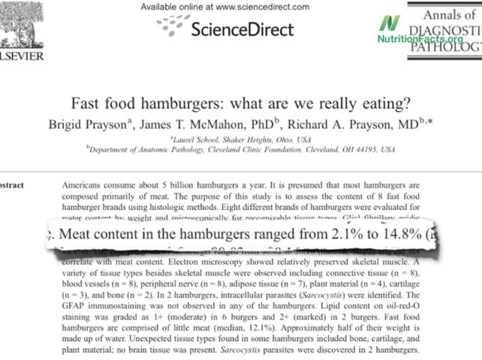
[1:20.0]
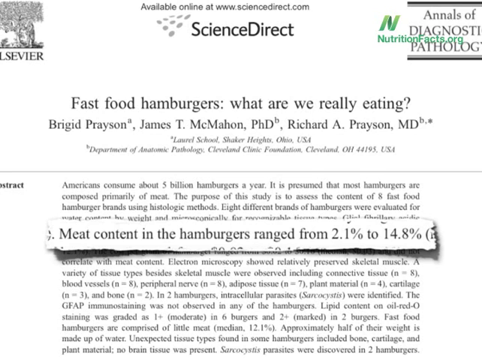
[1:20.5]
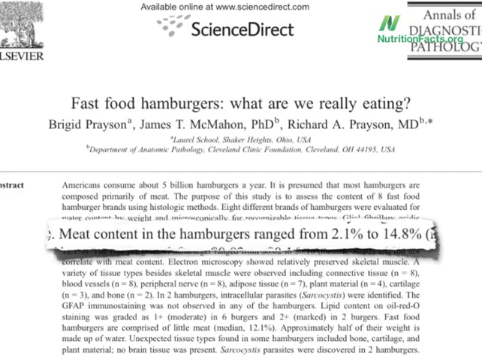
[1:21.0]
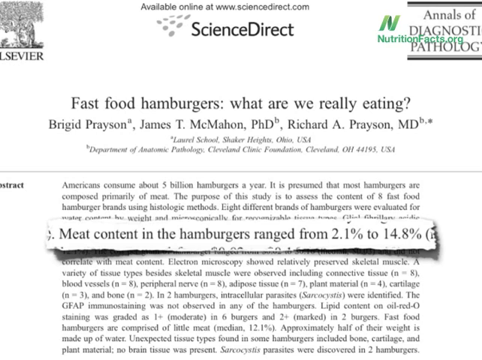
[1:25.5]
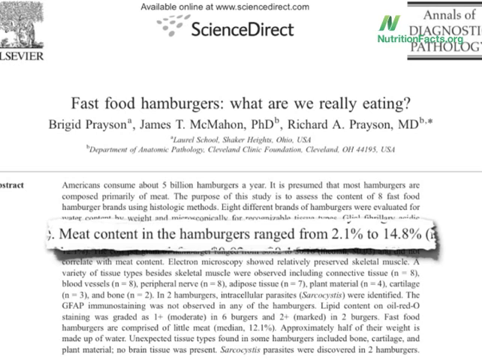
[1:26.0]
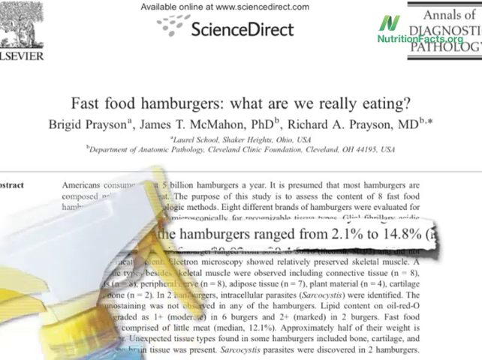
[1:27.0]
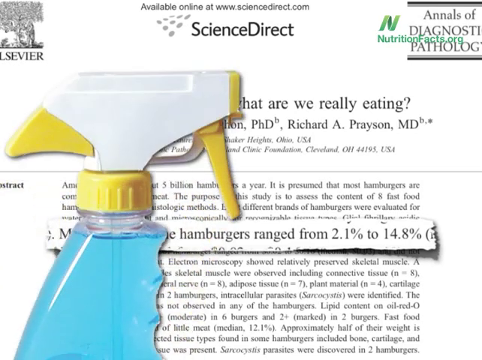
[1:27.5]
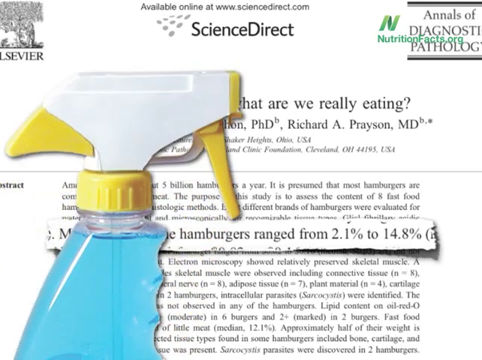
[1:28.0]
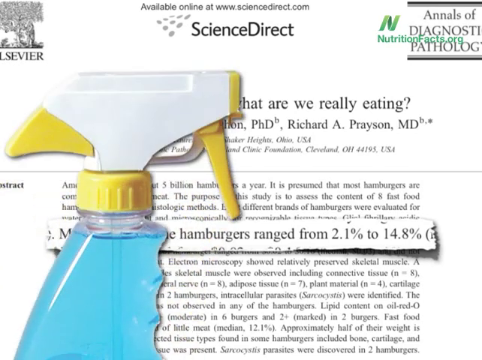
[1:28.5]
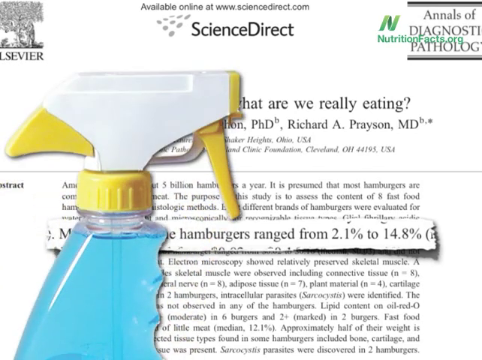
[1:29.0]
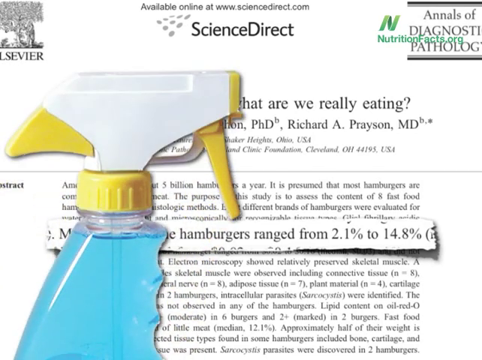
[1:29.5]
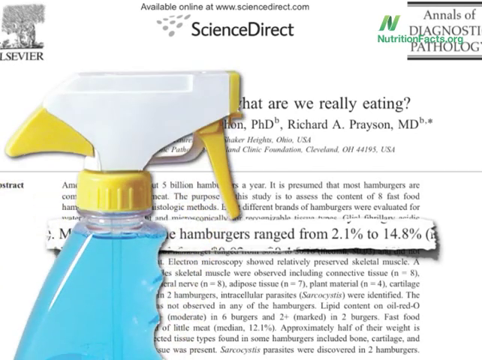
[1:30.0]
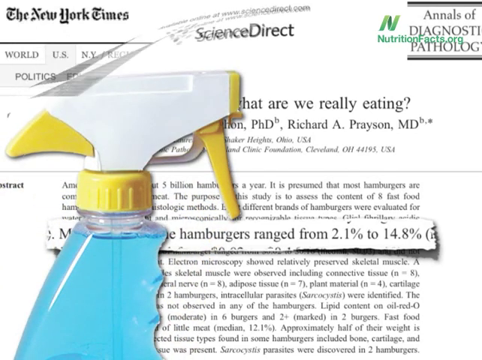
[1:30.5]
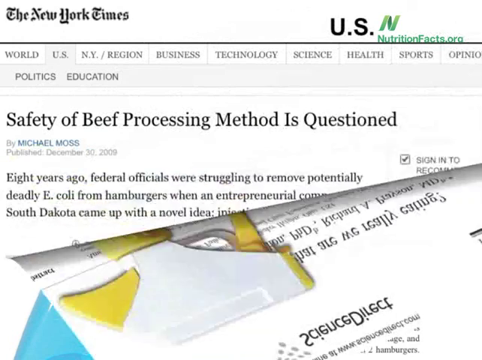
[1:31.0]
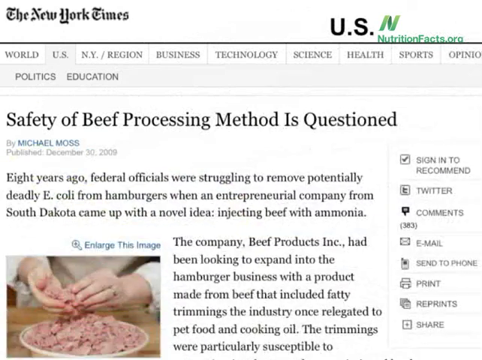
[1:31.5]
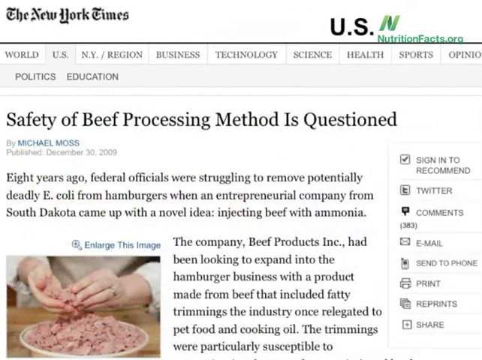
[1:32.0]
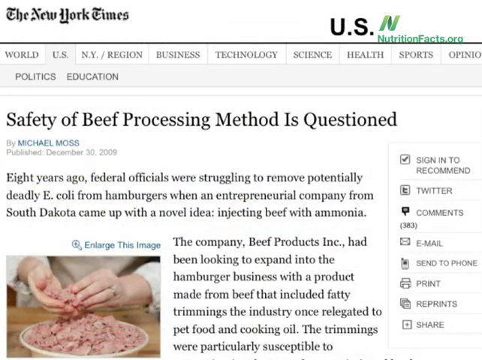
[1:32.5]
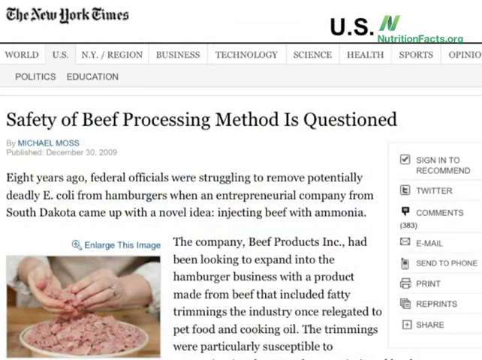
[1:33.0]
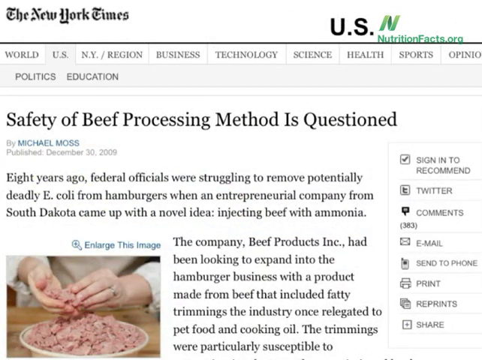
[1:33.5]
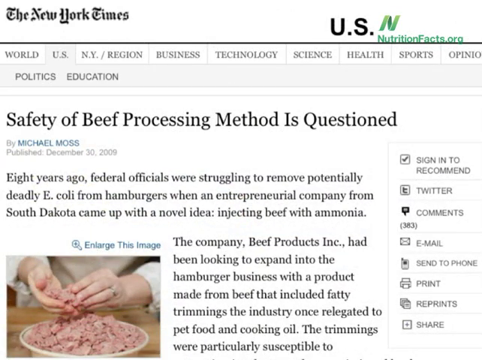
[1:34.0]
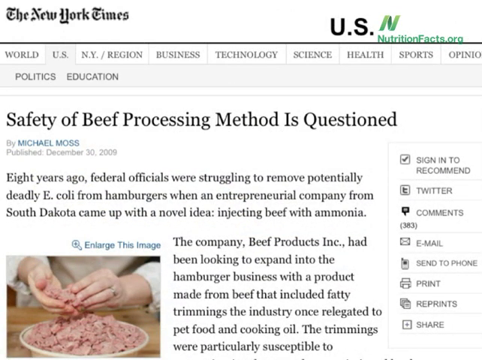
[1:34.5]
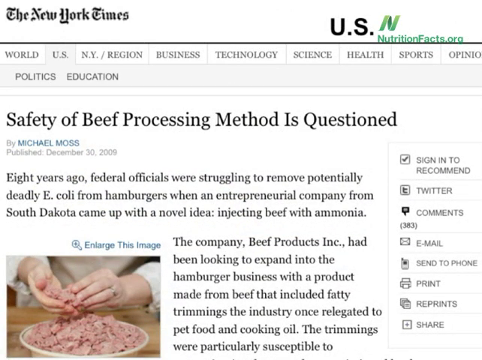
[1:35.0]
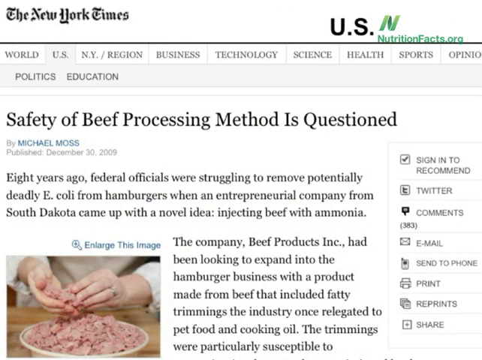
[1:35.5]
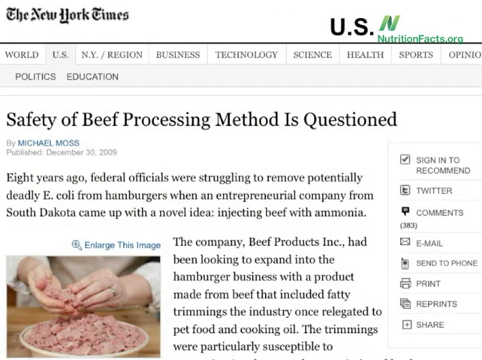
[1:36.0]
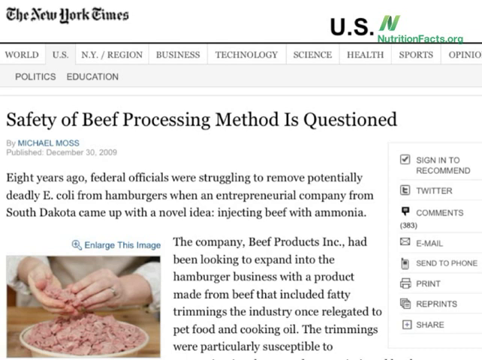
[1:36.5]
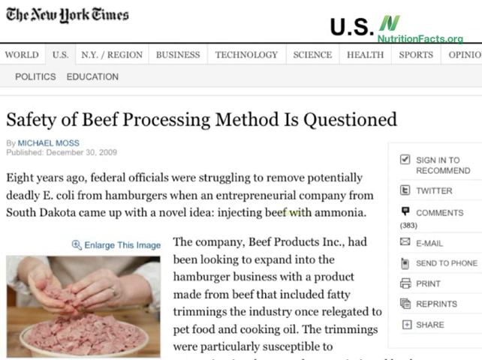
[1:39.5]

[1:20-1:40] An article from Science Direct shows the subtitle "fast food hamburgers what are we really eating" written below the name of the newspaper, with an excerpt that says "meat content in the hamburgers range from 2.1 percent to 14.8 percent" on a white background. A giant spray bottle filled with a blue liquid, with a white and yellow top, comes onto the screen. The page peels away to reveal a new headline, "safety of beef processing method is questioned," by Michael Moss, followed by text: "eight years ago federal officials were struggling to remove potentially deadly E. coli from hamburgers when an entrepreneurial company from South Dakota came up with a novel idea injecting beef with ammonia the company Beef Products Inc had been looking to expand into the hamburger business with a product made from beef that included fatty trimmings the industry once relegated to pet food and cooking oil the trimmings were particularly susceptible to"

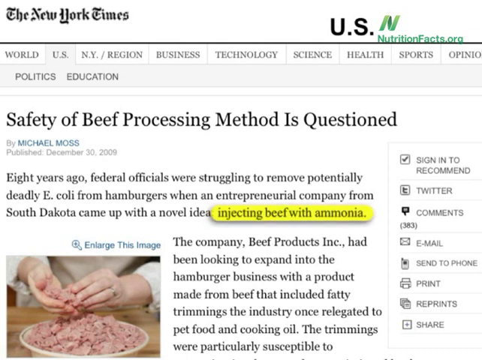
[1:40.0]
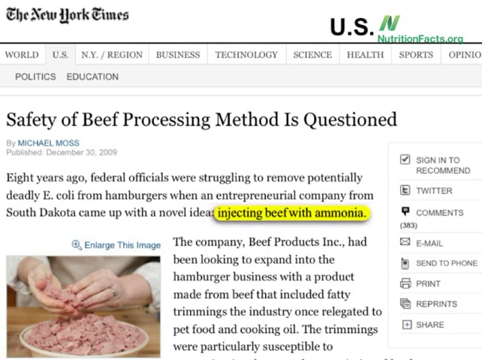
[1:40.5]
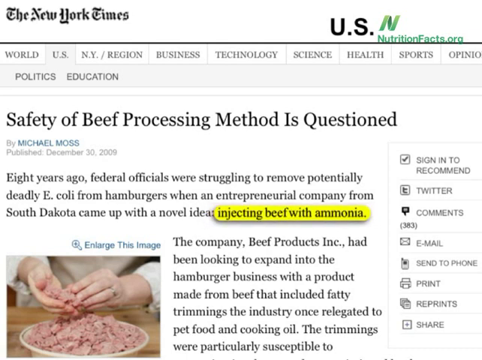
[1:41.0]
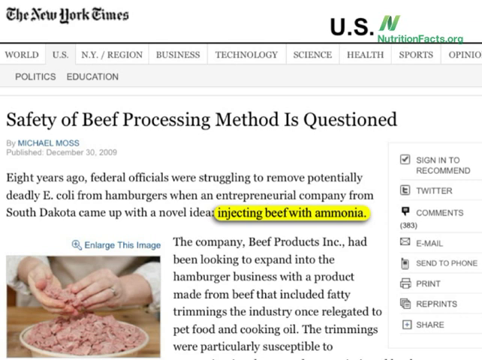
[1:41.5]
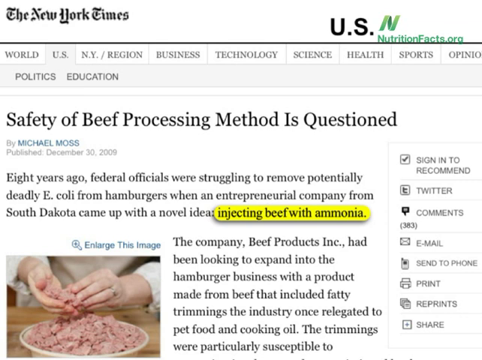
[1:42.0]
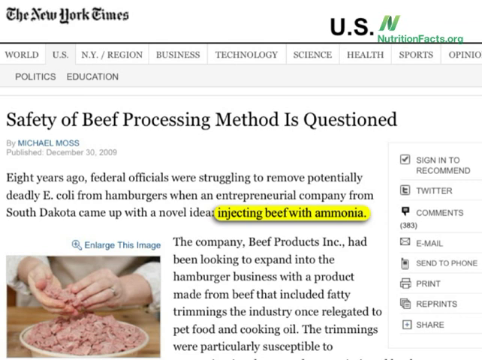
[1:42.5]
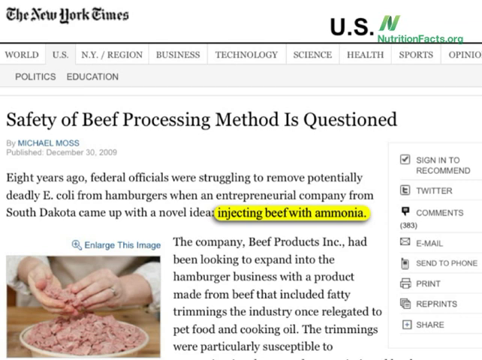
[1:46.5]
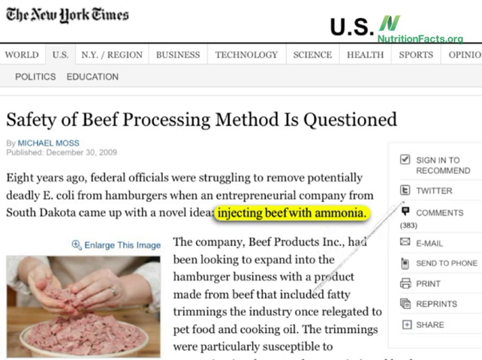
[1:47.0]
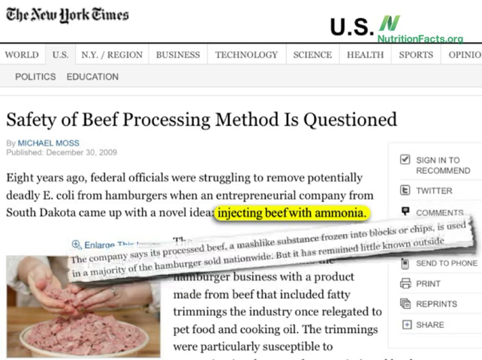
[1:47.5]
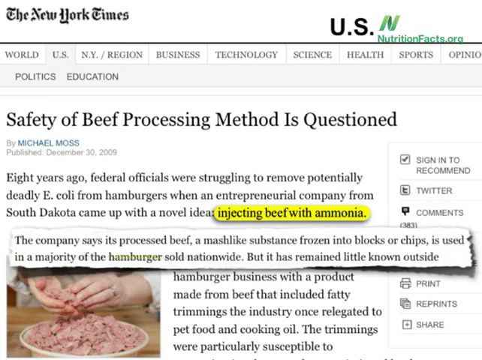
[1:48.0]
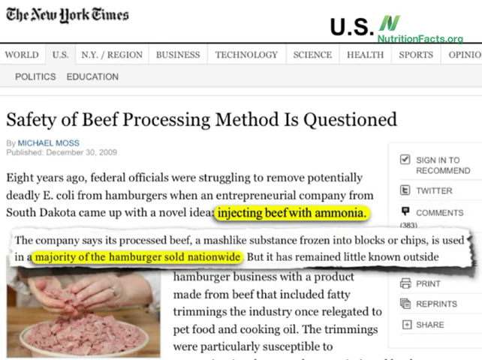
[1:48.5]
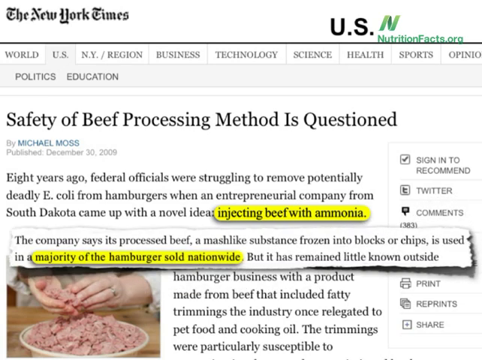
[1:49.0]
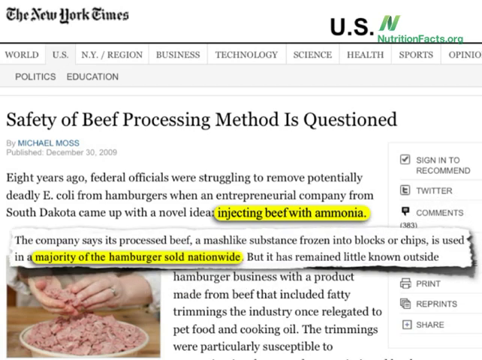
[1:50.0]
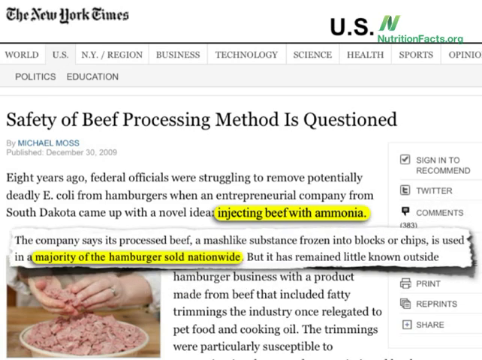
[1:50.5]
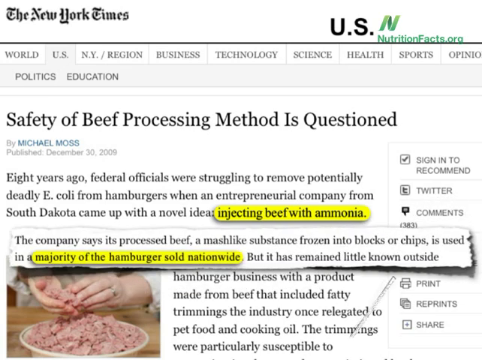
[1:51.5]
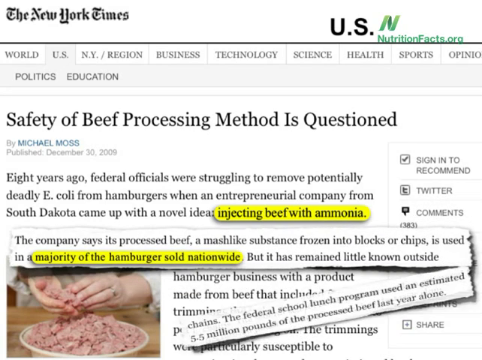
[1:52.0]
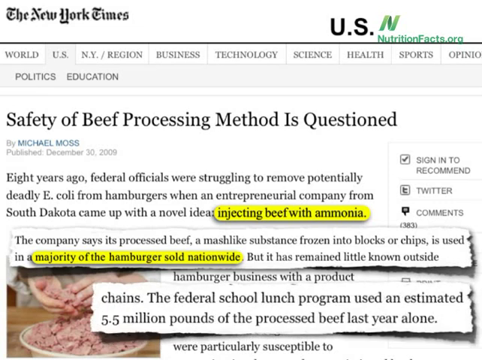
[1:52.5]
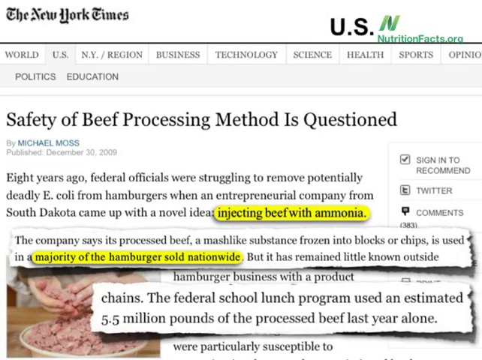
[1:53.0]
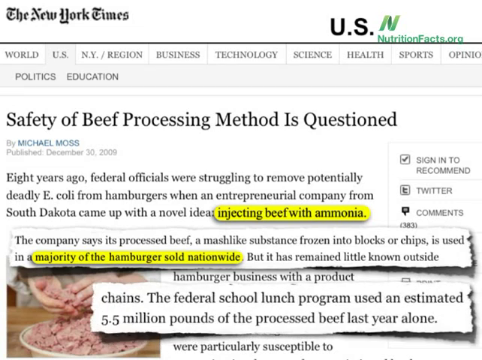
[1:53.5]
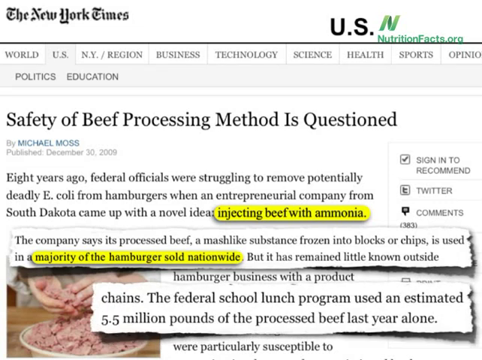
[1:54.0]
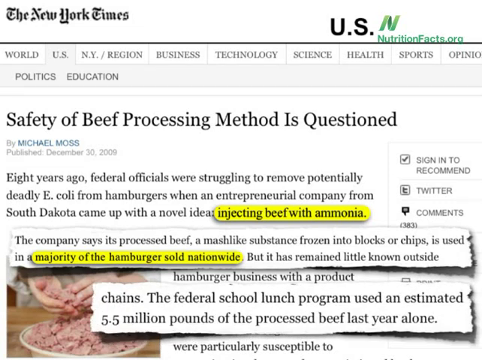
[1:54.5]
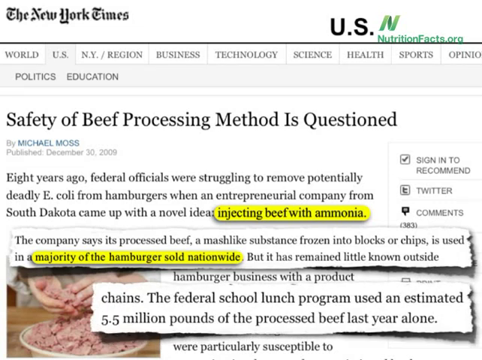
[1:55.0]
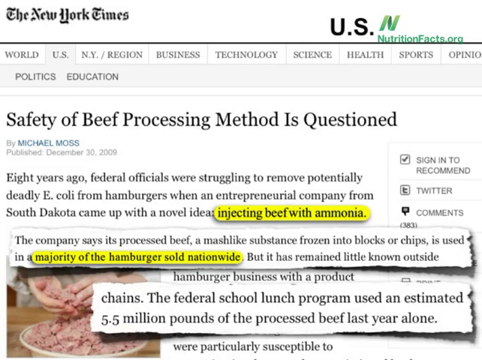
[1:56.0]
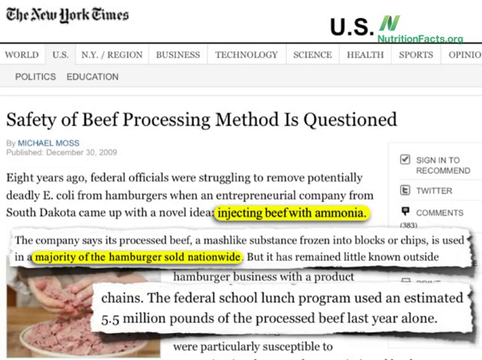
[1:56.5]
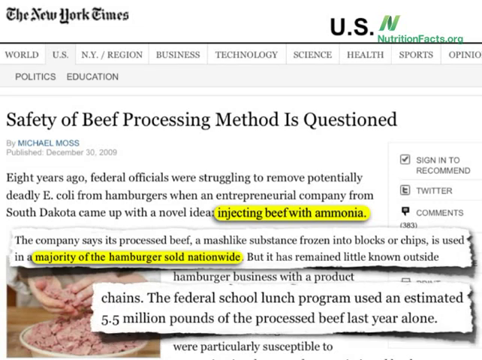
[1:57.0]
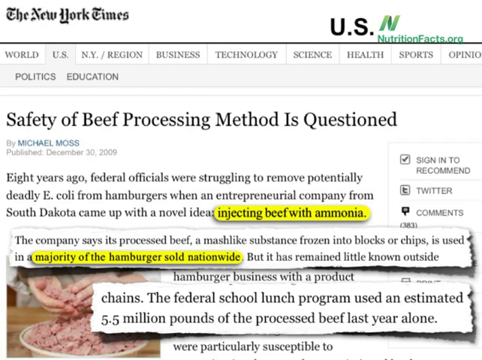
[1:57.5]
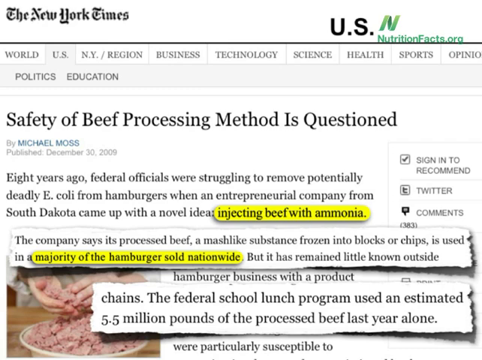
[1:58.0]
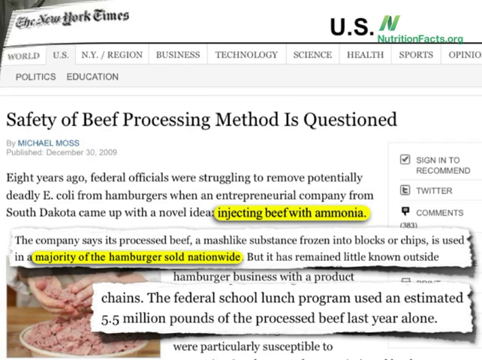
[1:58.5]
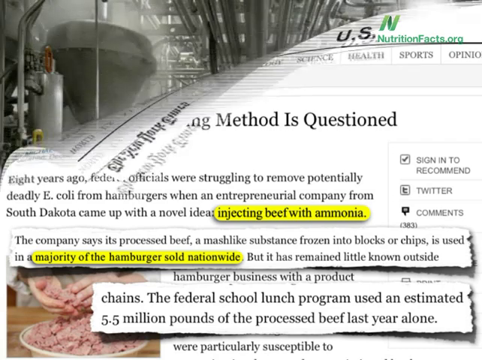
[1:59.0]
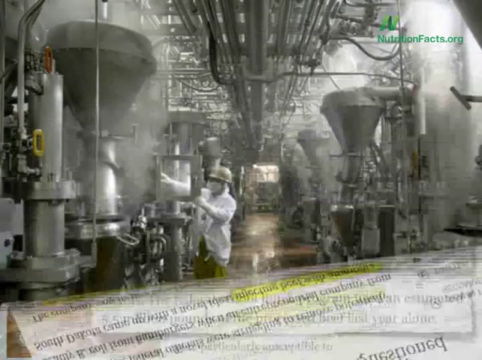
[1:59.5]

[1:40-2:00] An article says "Safety of Beef Processing Method is Questioned by Michael Moss" and reads, "eight years ago, federal officials were struggling to remove potentially deadly E. coli from hamburgers when an entrepreneurial company from South Dakota came up with a novel idea, injecting beef with ammonia." The words "injecting beef with ammonia" are highlighted in yellow. The text continues, "The company, Beef Products, Inc., had been looking to expand into the hamburger business with a product made from beef that included fatty trimmings the industry once relegated to pet food and cooking oil. The trimmings were particularly susceptible to". Another excerpt appears, saying the company's processed beef, a mash-like substance frozen into blocks or chips, "is used in a majority of the hamburger sold nationwide, but it has remained little known outside"; the words "majority of the hamburger sold nationwide" are highlighted in yellow. It also reads "the federal school lunch program used an estimated 5.5 million pounds of the processed beef last year alone."